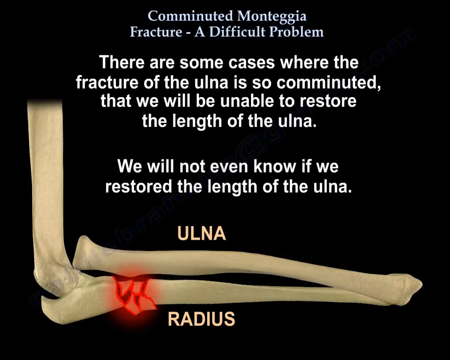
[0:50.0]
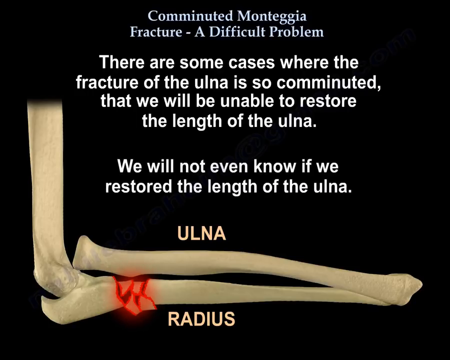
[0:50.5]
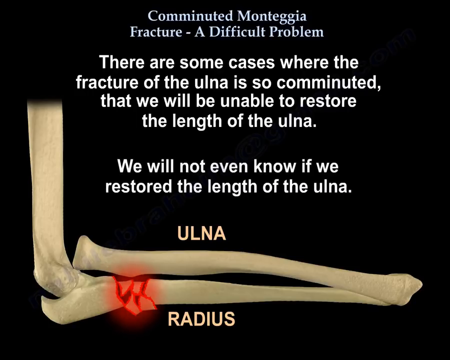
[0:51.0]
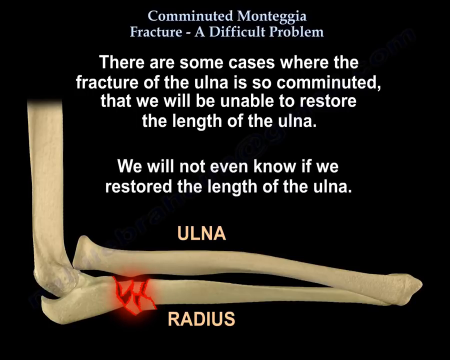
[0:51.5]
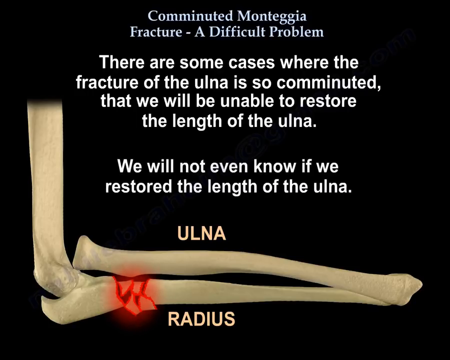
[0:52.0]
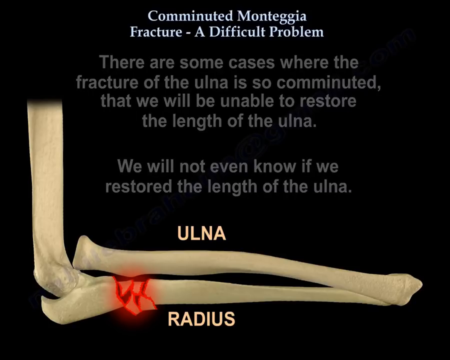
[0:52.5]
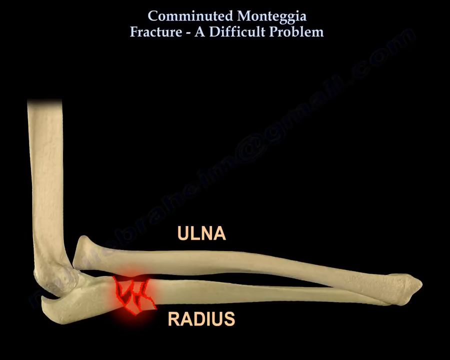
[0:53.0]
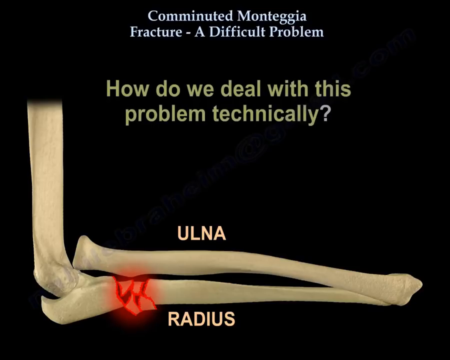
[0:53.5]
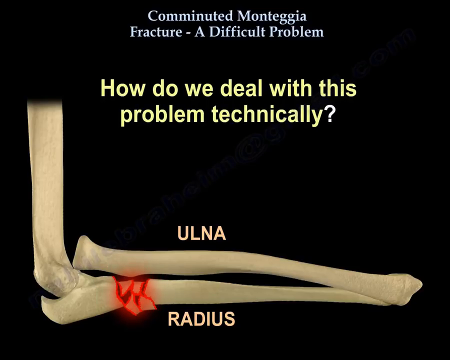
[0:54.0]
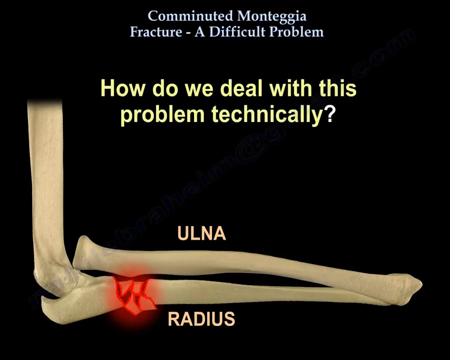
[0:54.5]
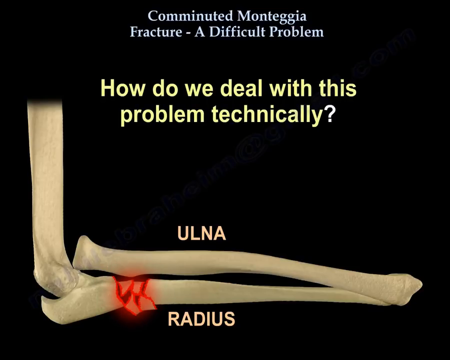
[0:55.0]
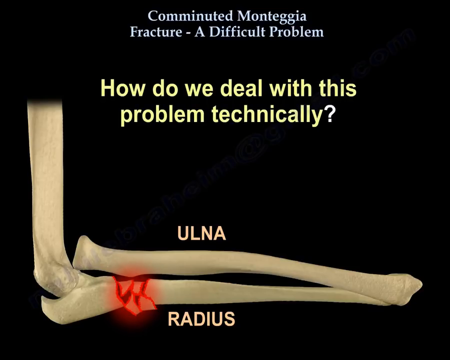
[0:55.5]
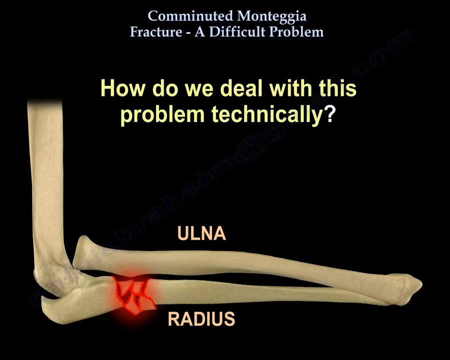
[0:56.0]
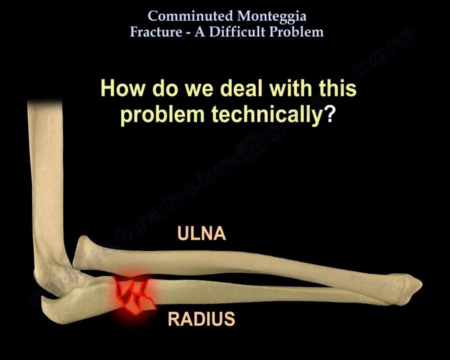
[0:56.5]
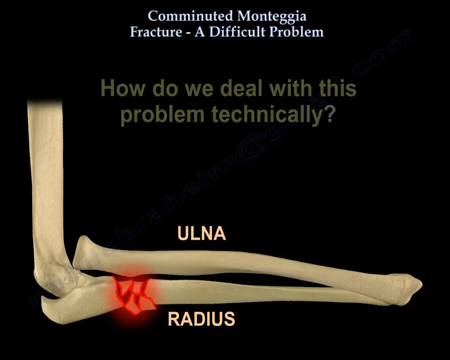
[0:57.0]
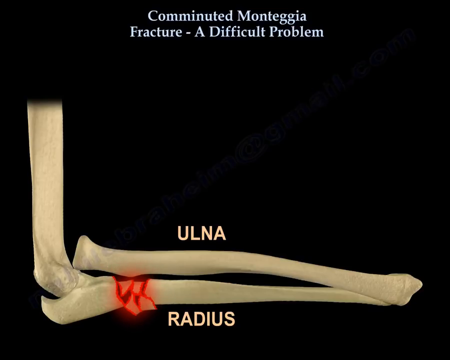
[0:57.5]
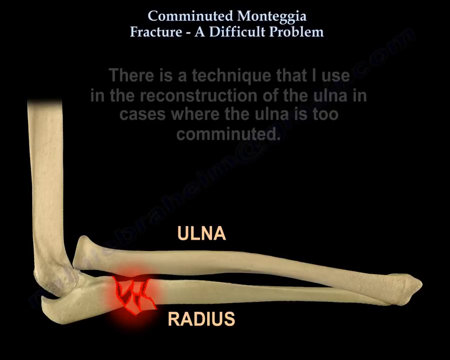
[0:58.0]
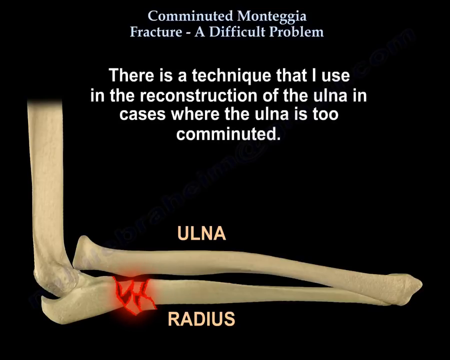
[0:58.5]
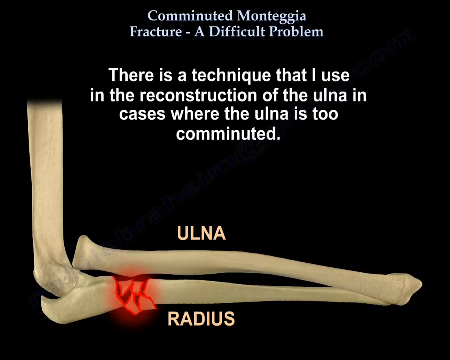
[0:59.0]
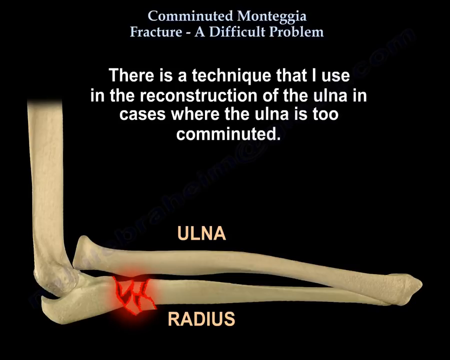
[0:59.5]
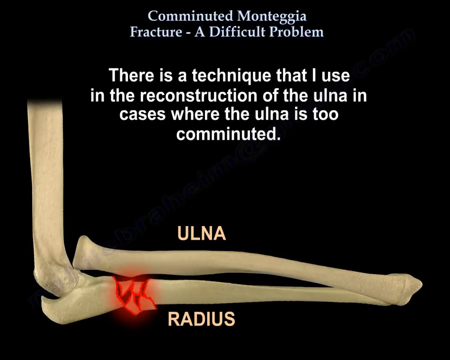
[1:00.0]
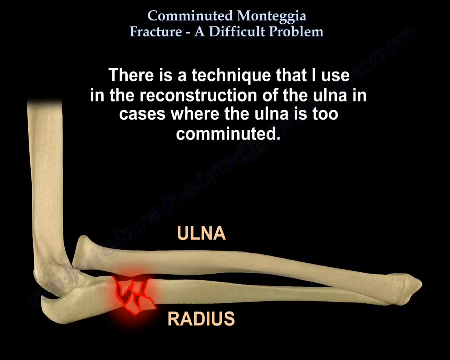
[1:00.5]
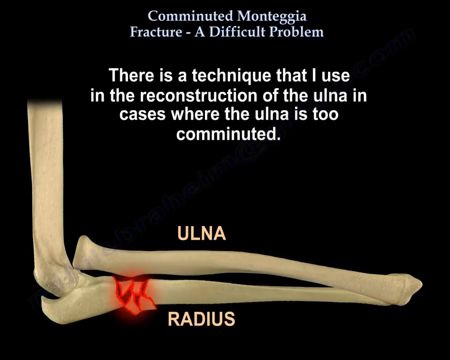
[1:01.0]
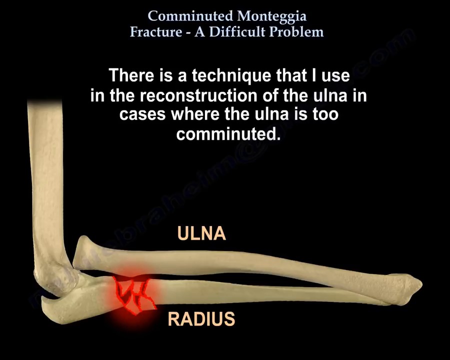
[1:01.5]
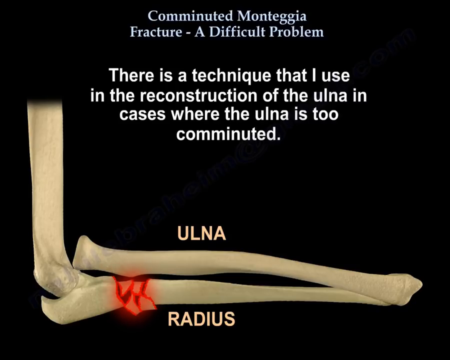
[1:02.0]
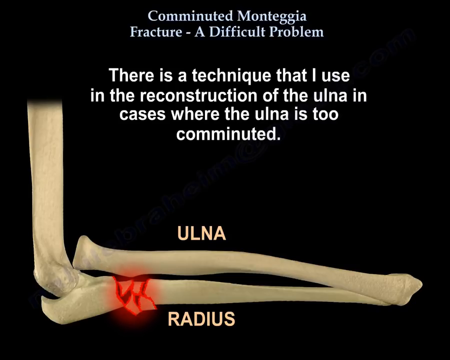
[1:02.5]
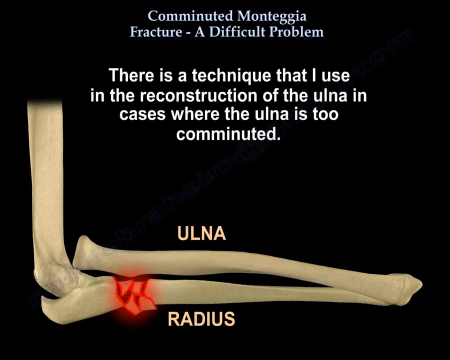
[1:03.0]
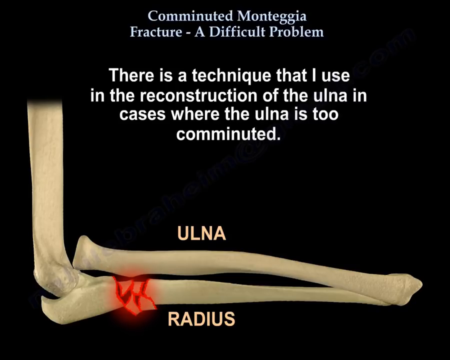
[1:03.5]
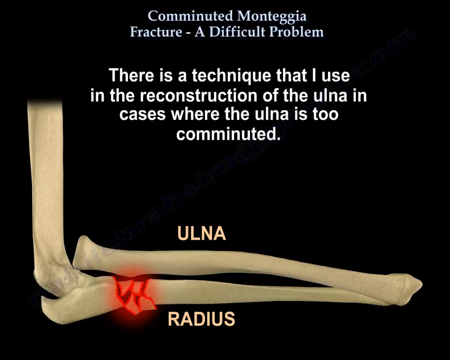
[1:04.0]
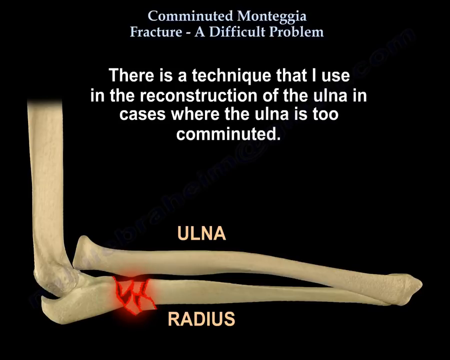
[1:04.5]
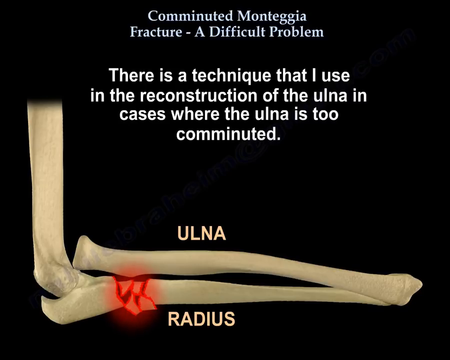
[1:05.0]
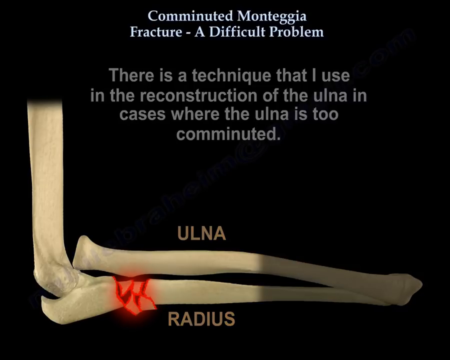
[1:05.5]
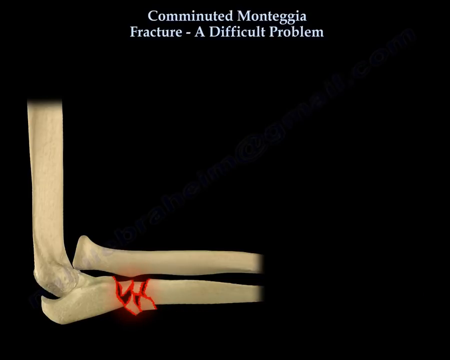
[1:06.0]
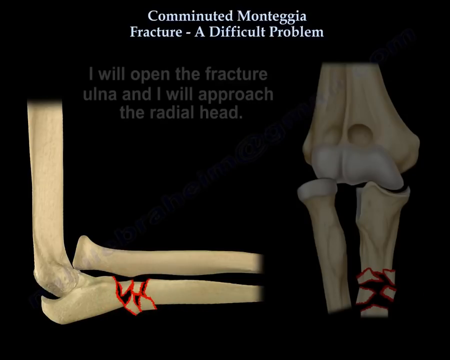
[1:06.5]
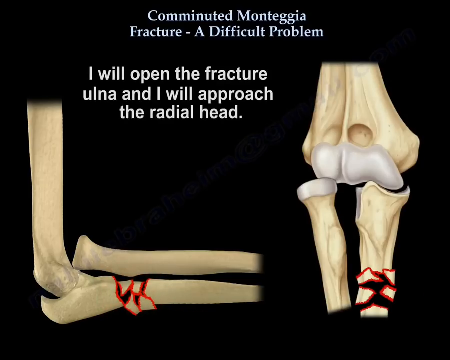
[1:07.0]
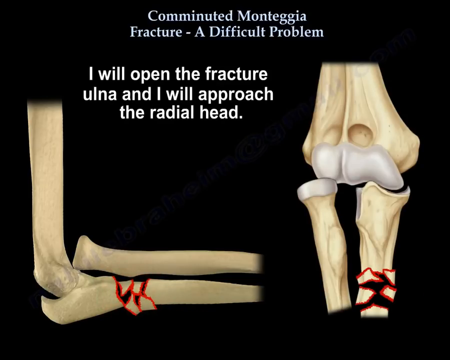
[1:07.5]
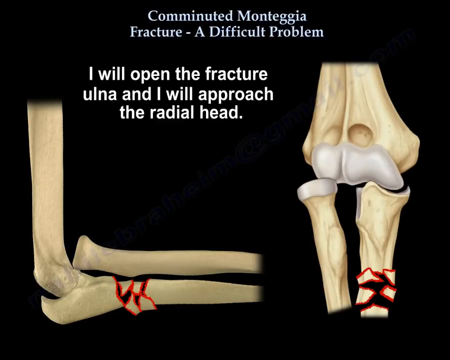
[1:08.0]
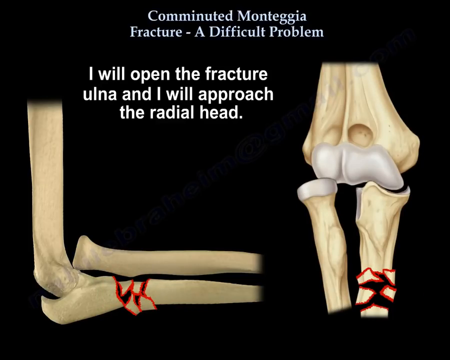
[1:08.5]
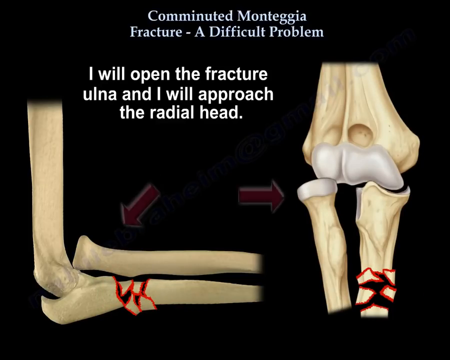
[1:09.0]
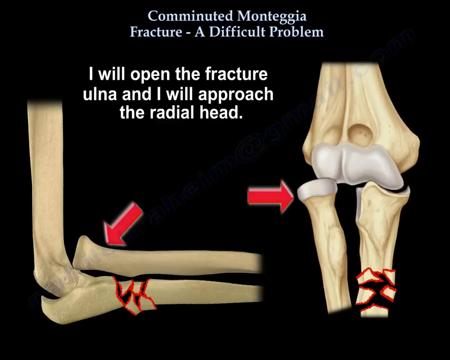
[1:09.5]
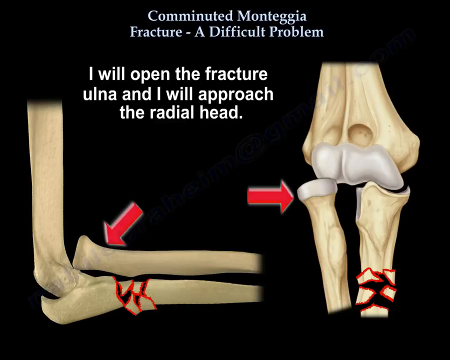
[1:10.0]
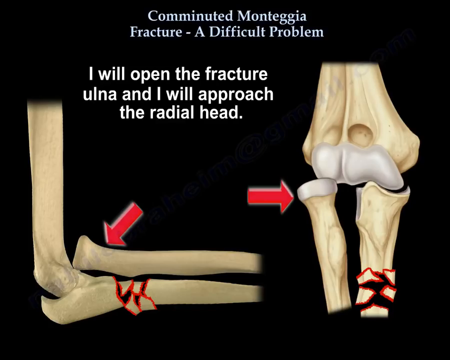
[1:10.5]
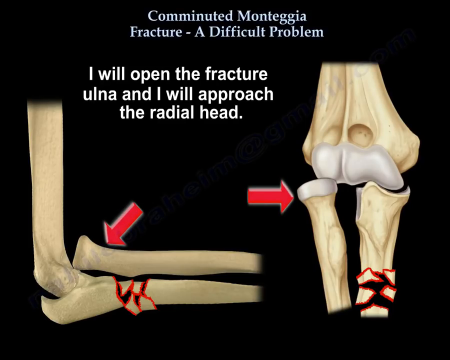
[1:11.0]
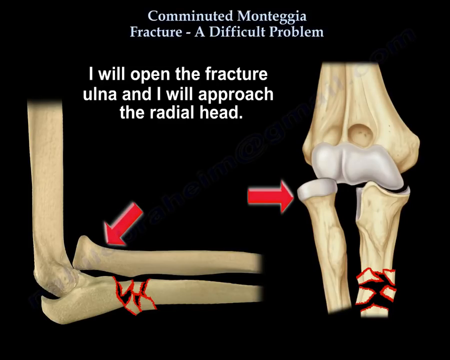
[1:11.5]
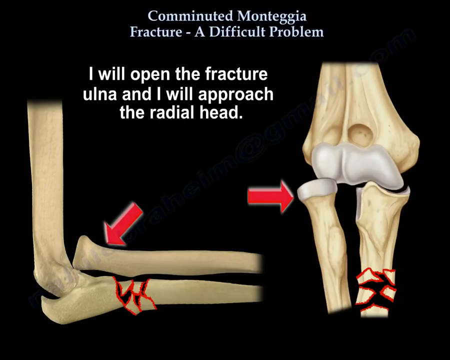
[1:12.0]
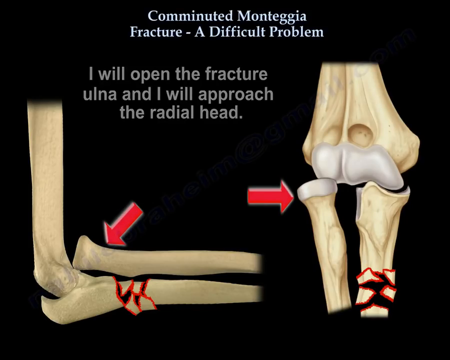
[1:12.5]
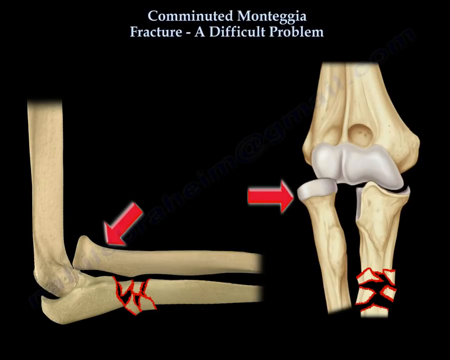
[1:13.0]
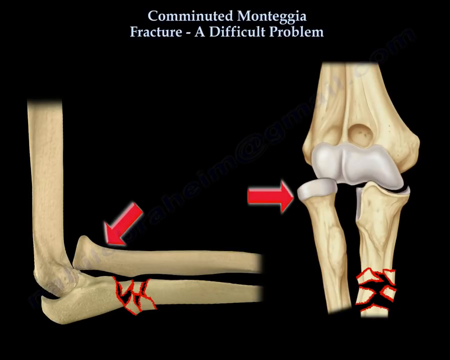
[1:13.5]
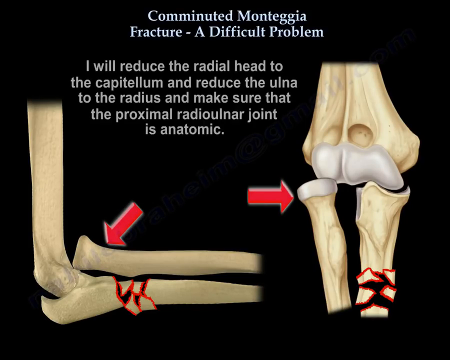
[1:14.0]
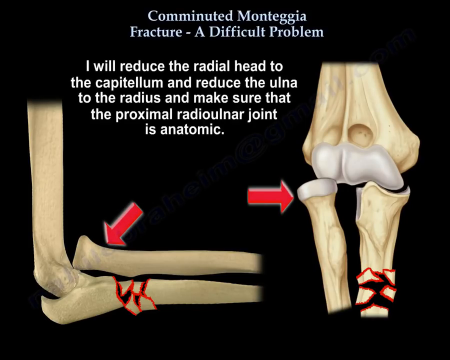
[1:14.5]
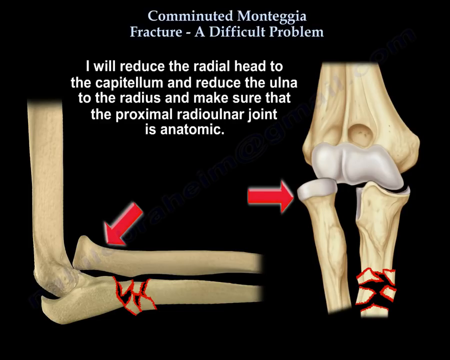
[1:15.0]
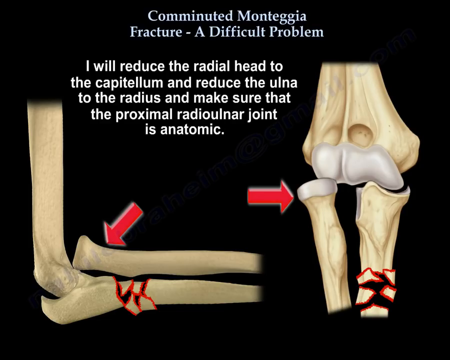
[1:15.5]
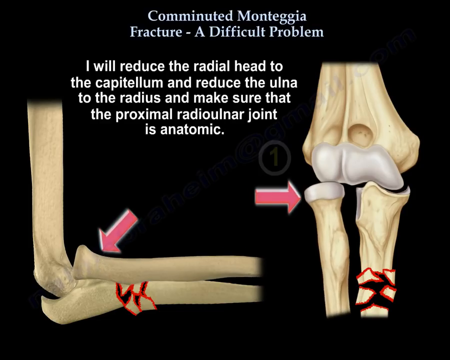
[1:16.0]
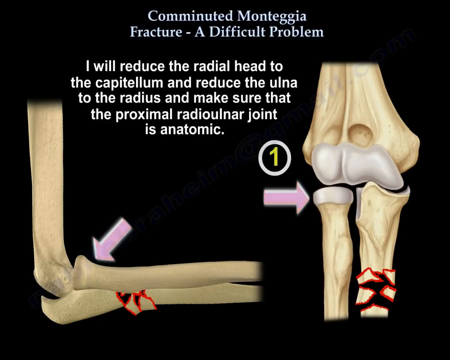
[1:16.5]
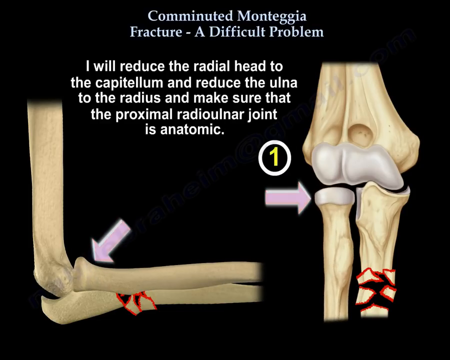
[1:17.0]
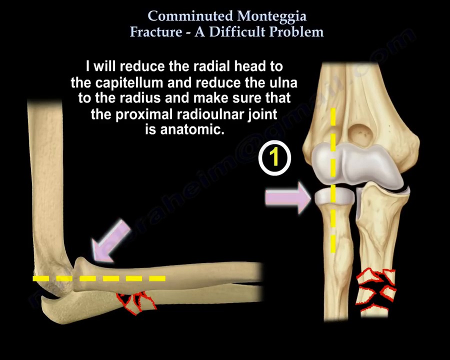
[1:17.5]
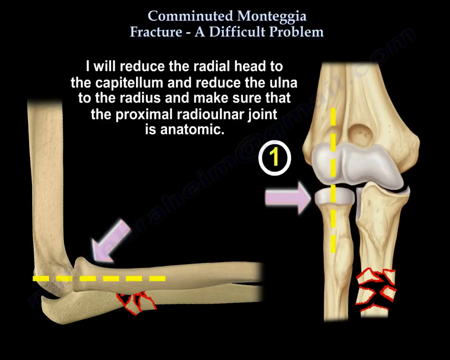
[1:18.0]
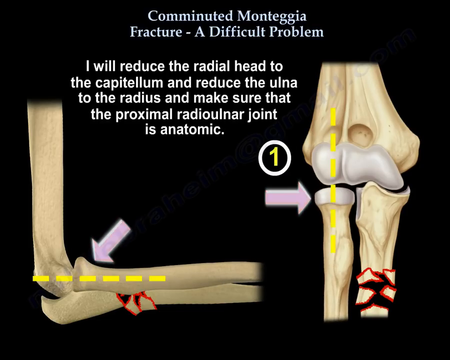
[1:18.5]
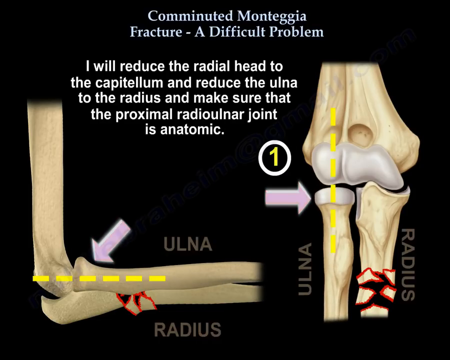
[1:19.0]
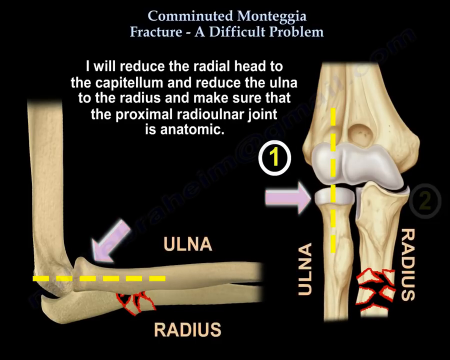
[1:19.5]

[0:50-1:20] The heading "Comminuted Monteggia fracture, a difficult problem" remains centered at the top of the black frame. Below it, in thicker white font, the text reads "There are some cases where the fracture of the ulna is so comminuted that we will be unable to restore the length of the ulna." The graphic appears again, and two more lines of text appear below the previous ones after a space: "we will not even know if we restored the length of the ulna." The word "ulna" is on the top bone and the word "radius" is below the bottom bone. Where the break is shown, there is now a kind of red blurring bordering it. In the central area below the main heading, the text "How do we deal with this problem technically?" appears and is then replaced with "There is a technique that I use in the reconstruction of the ulna in cases where the ulna is too comminuted."